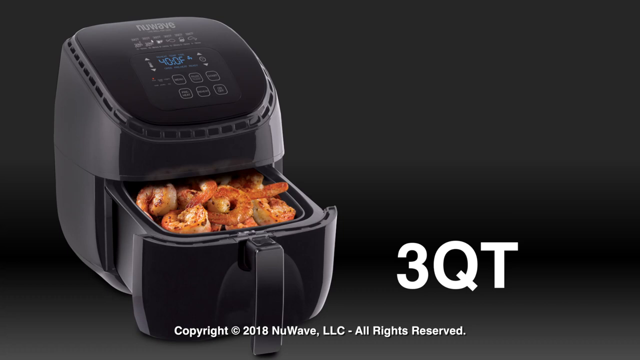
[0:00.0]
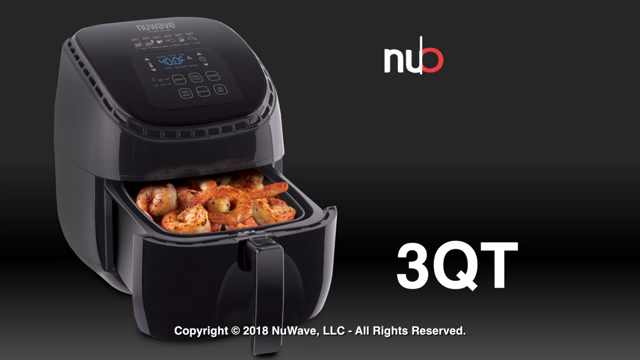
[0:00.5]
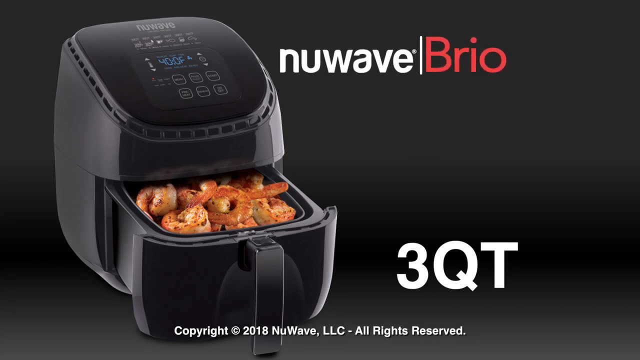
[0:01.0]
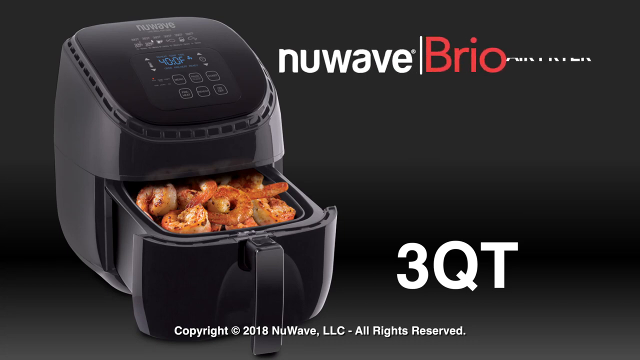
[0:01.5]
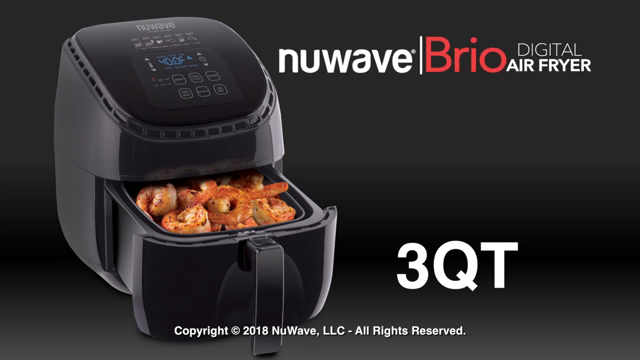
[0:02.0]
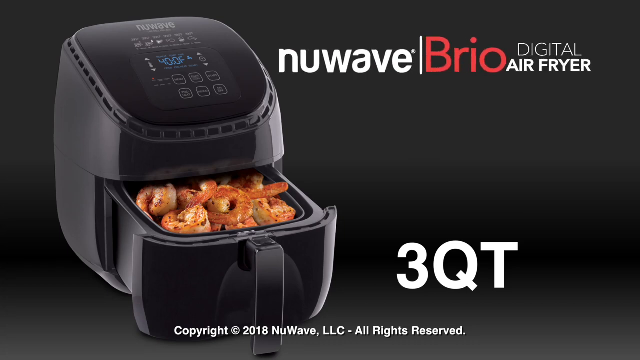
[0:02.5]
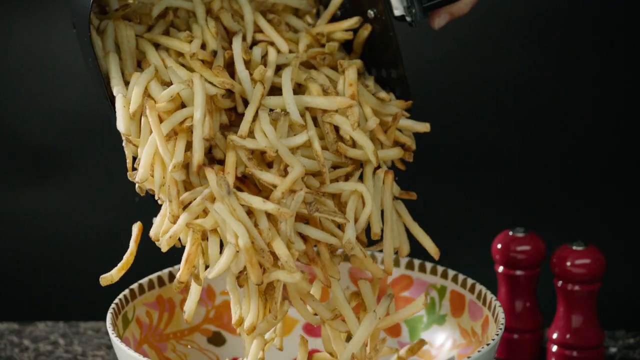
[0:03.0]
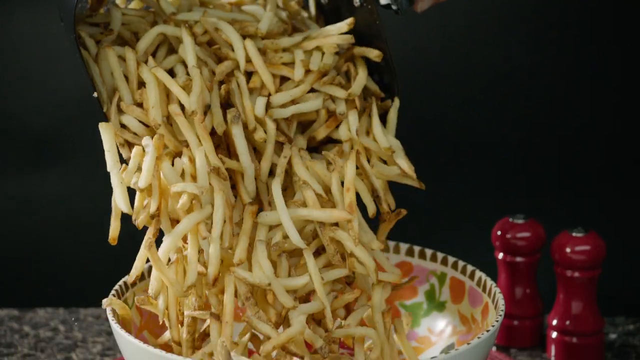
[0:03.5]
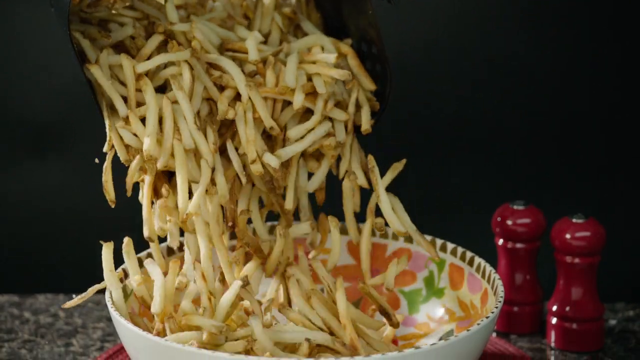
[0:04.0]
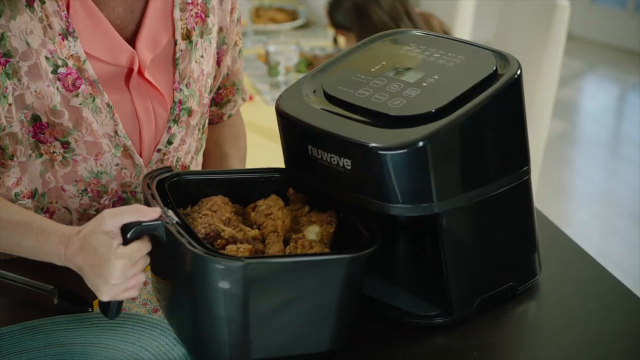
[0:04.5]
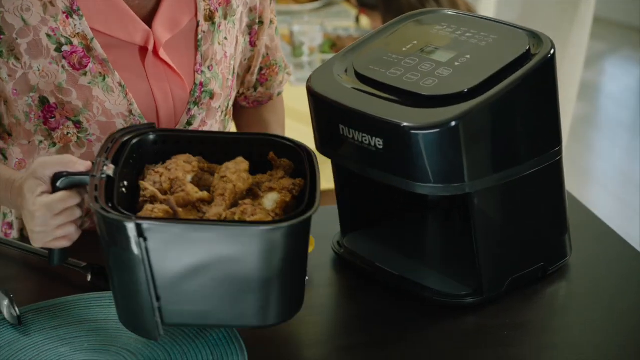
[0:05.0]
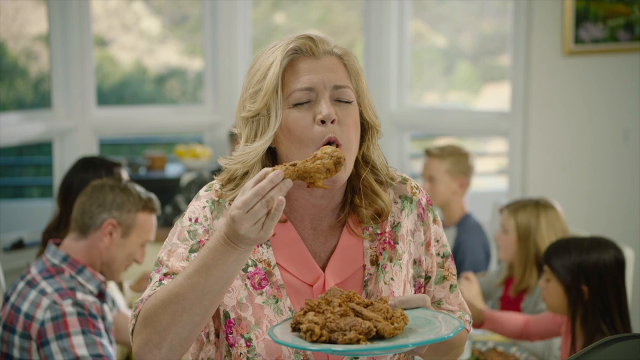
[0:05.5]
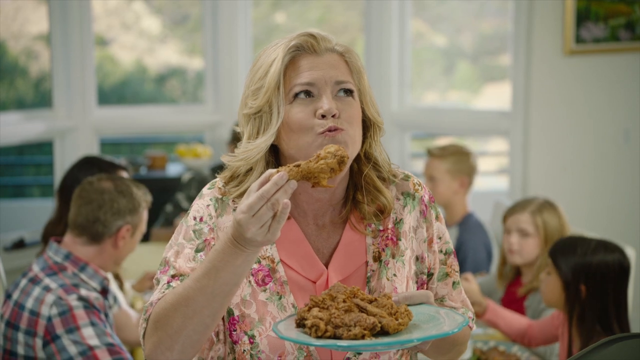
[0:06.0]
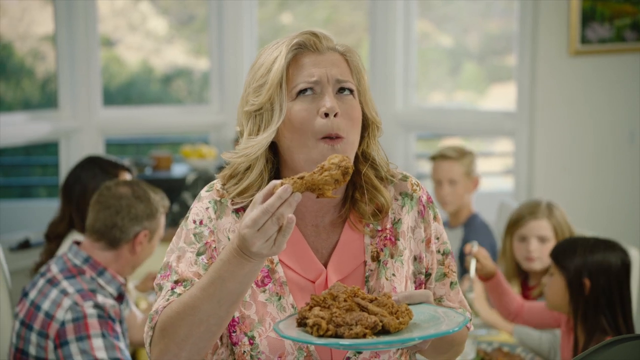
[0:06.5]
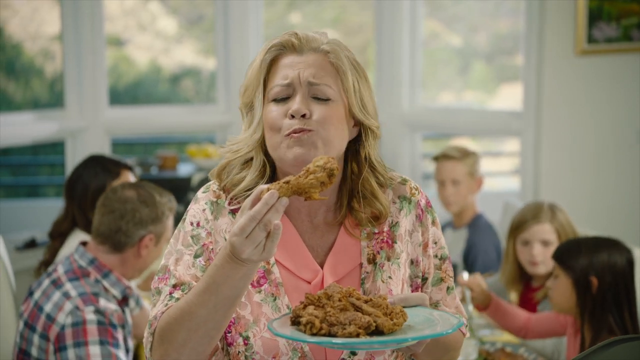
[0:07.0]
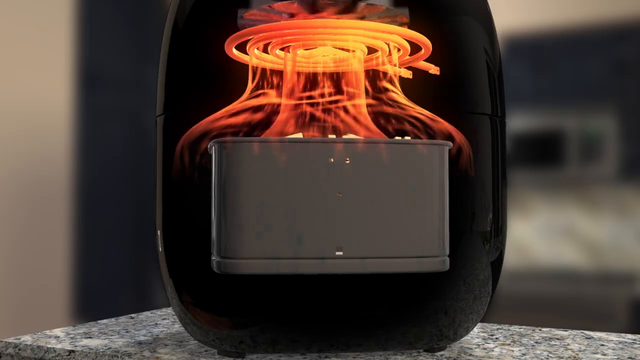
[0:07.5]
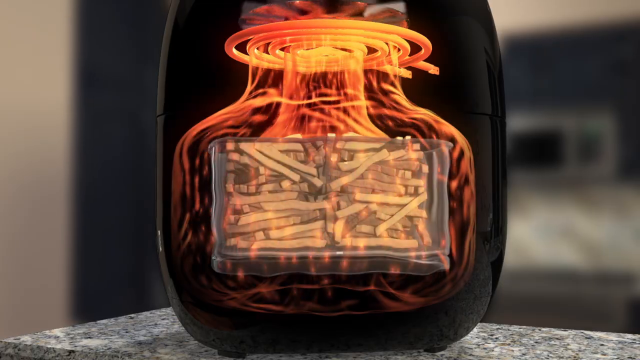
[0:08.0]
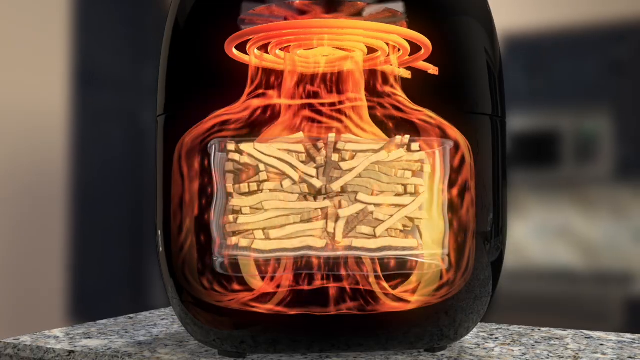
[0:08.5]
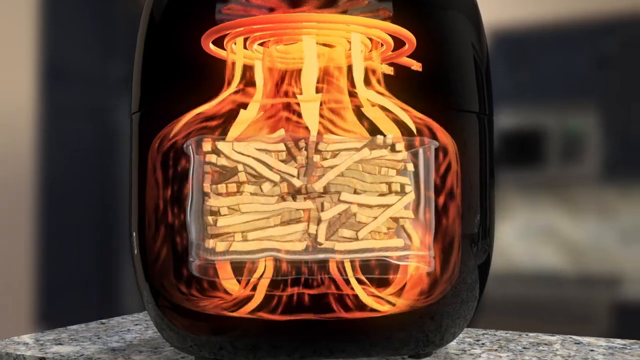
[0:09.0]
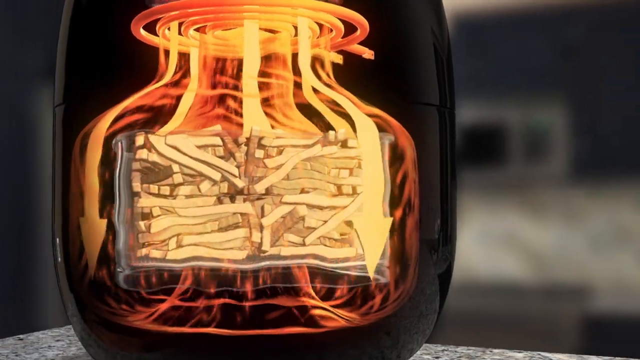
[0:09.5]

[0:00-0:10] Against a black backdrop, an appliance in the lower left is opened up: the New Wave Brio digital air fryer. French fries are in its basket, and there is crunchy, cooked chicken in the basket as well. A woman holds a chicken leg in her right hand, takes a bite and smiles. A right hand pulls the basket out, full of chicken. The woman, who has blonde hair, takes a bite and looks up toward her right; she is in the center of the screen. Over her right shoulder are two children, a boy toward the back and a girl toward the front. On the other side, the heads of a man and a woman are visible as silhouettes, looking on, behind the woman.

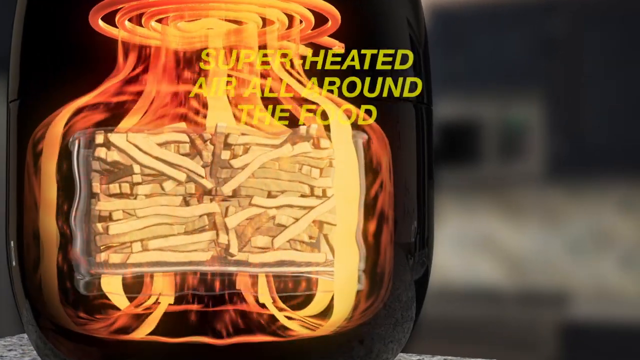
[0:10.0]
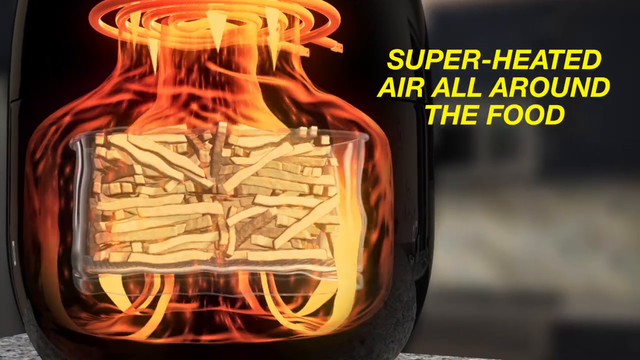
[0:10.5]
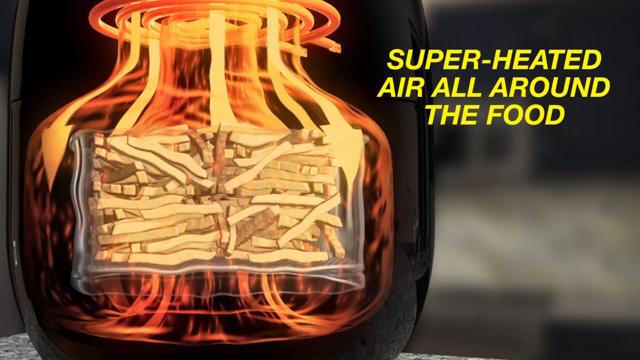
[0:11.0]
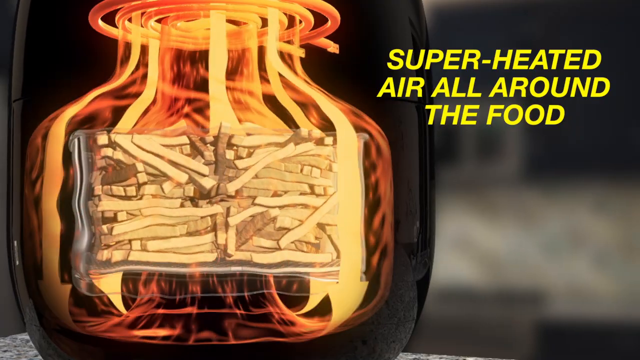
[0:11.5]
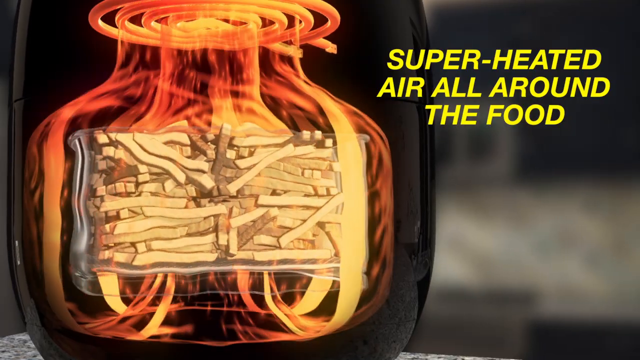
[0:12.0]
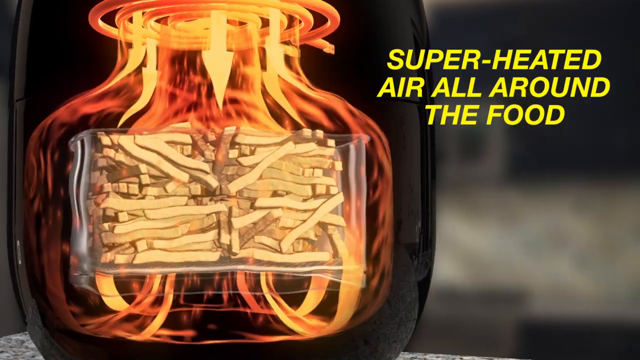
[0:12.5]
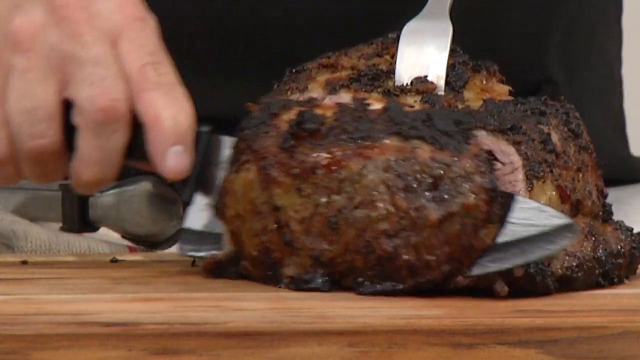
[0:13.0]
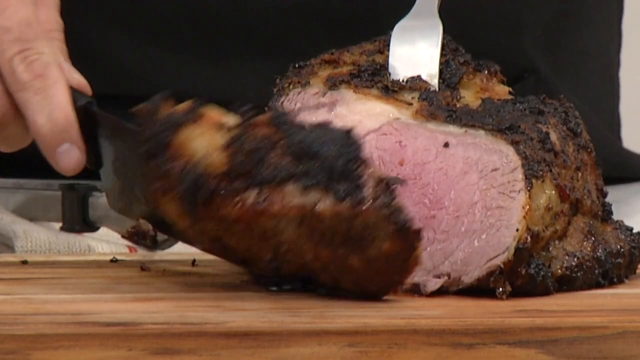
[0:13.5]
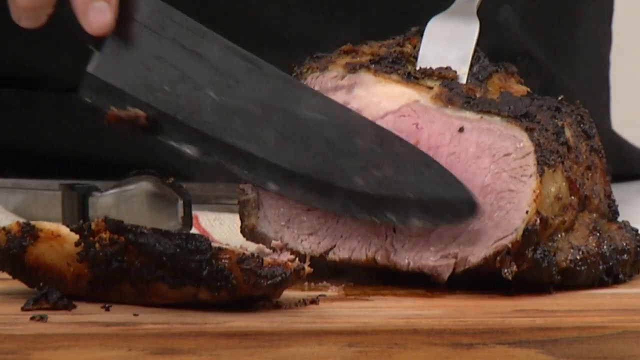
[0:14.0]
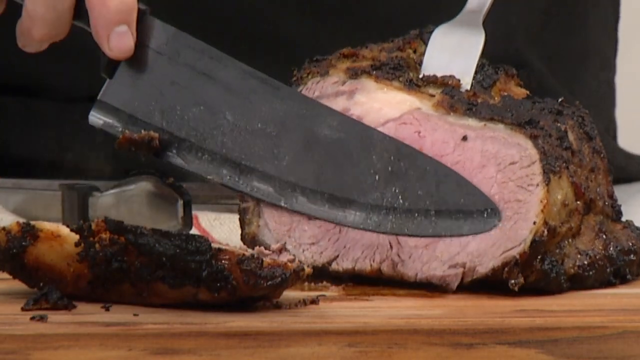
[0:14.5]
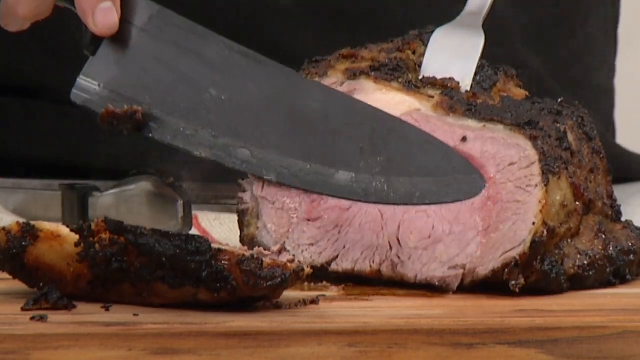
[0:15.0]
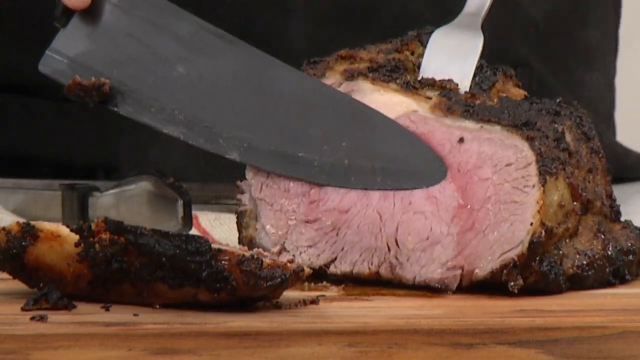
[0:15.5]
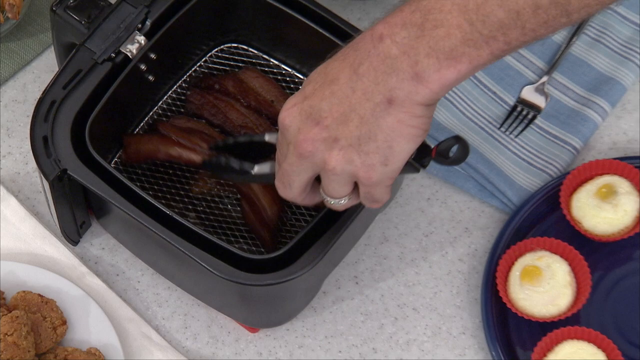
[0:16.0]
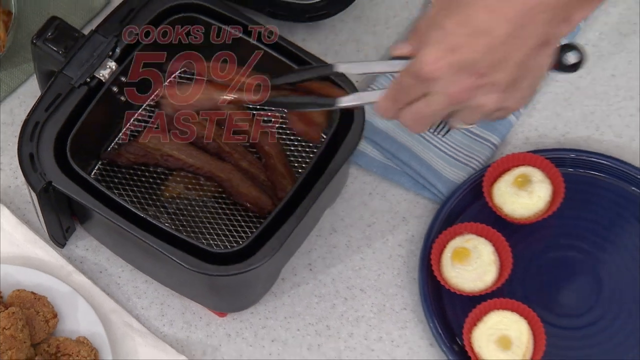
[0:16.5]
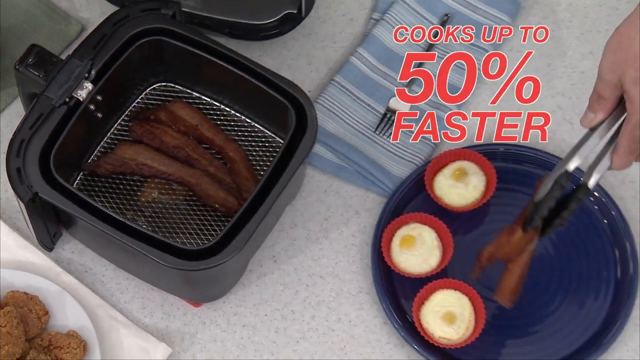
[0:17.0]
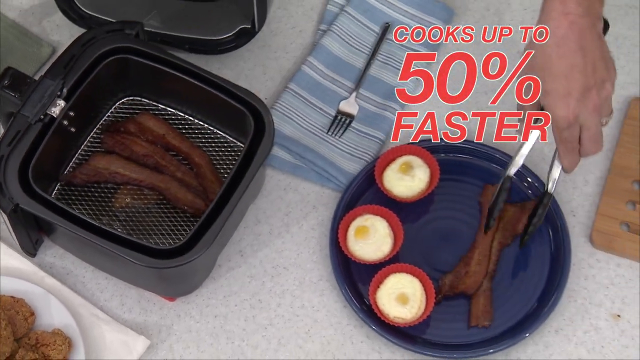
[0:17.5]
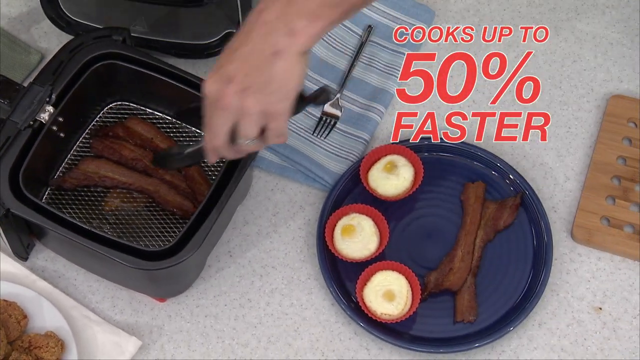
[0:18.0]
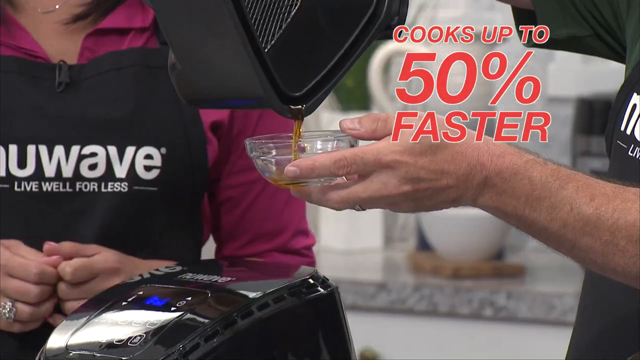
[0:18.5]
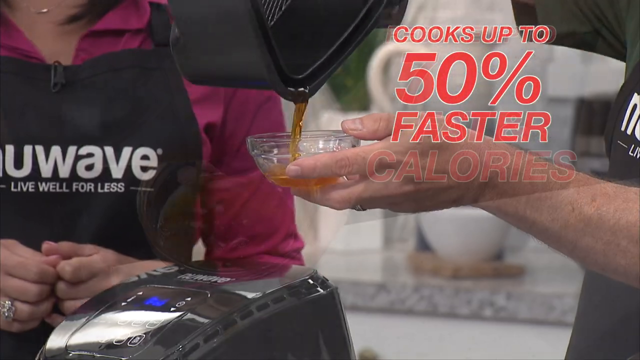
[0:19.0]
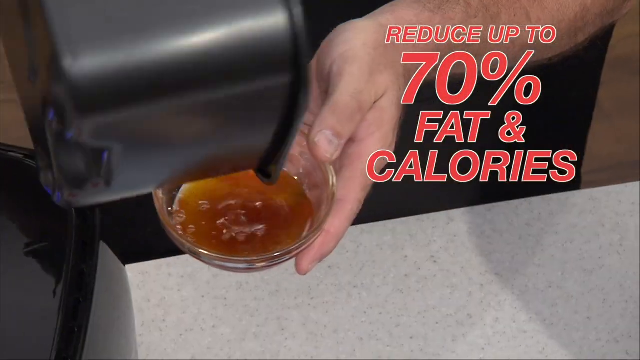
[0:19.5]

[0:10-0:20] The internal workings of a black object are shown, with superheated air all around the food. Wording comes over toward the right as an area comes down around the food, turning orange for a moment. Next, a large object appears that is black on the outside and pink on the inside, with a silver object going down through its top. It is being sliced, with a slice coming off the edge facing the viewer toward the left. The person holds a black, very pointed knife against the pink portion of the meat and slices down. The scene moves to the fryer as objects are picked up, with "50% faster cooking" indicated. A left hand uses tongs to pick up the objects. A silver fork lies on a blue striped paper or napkin.